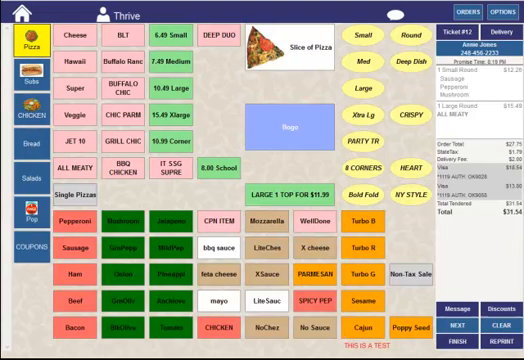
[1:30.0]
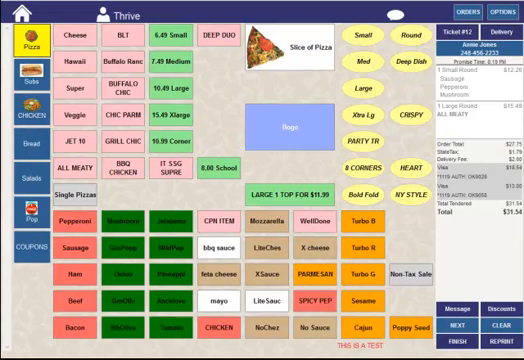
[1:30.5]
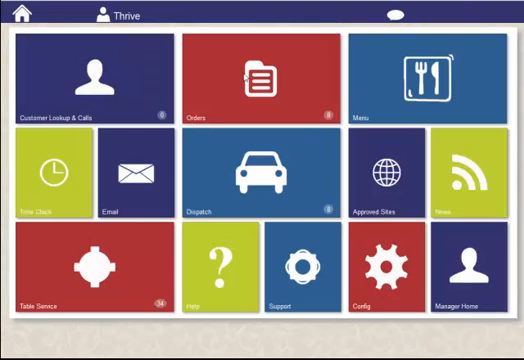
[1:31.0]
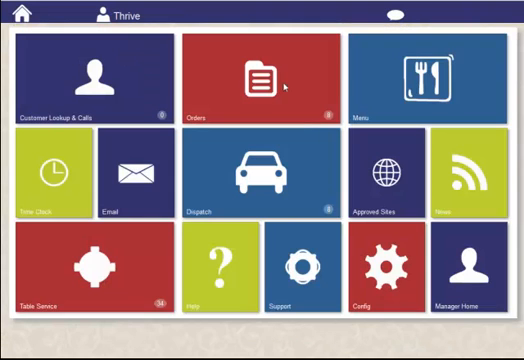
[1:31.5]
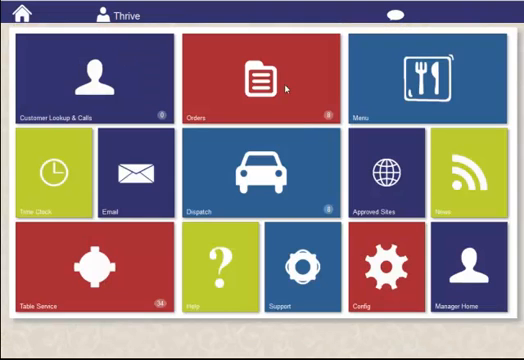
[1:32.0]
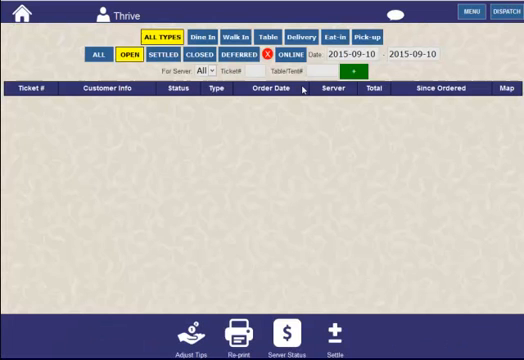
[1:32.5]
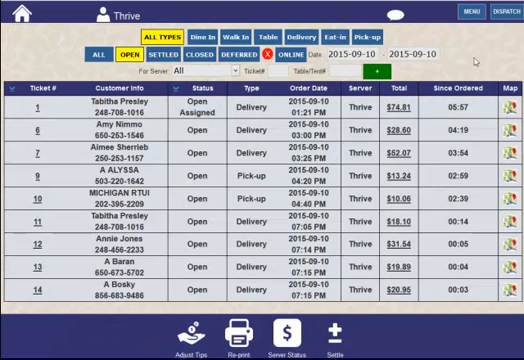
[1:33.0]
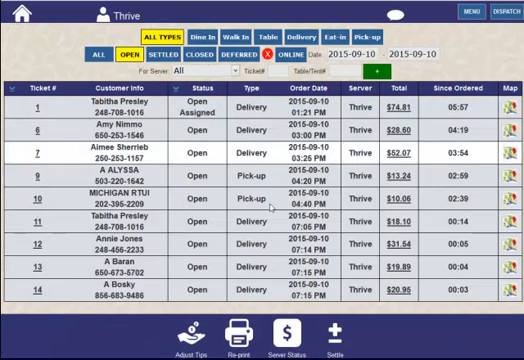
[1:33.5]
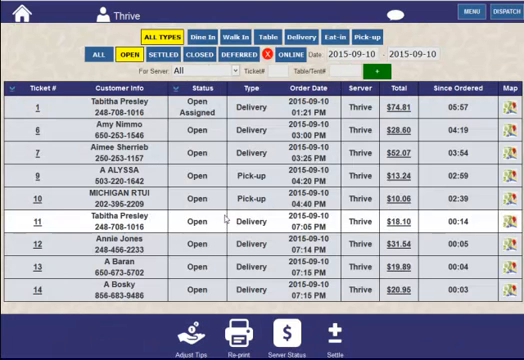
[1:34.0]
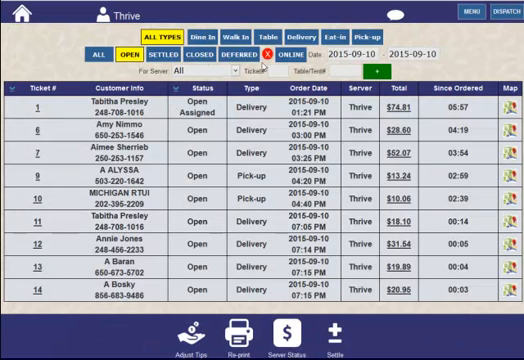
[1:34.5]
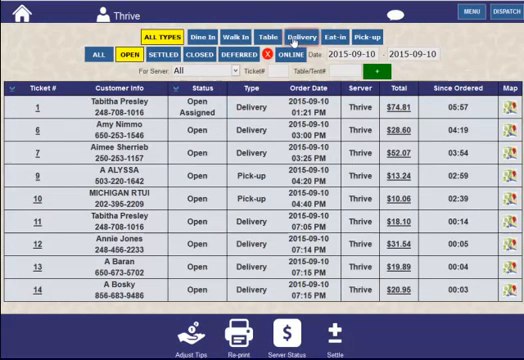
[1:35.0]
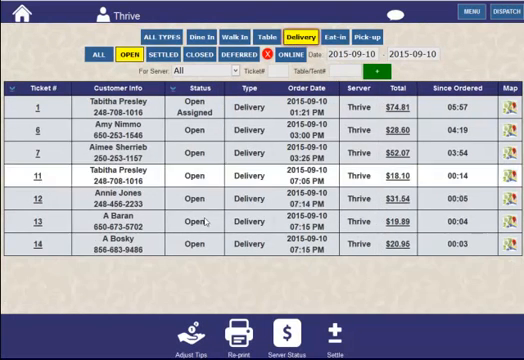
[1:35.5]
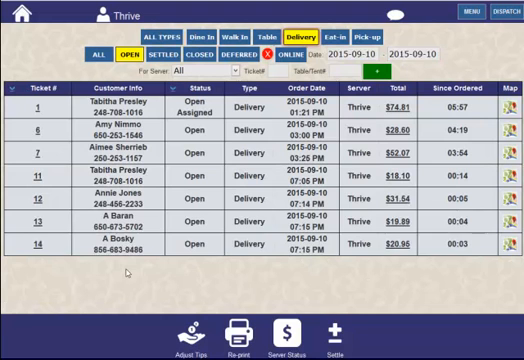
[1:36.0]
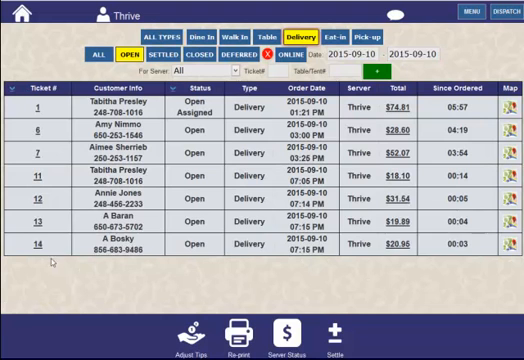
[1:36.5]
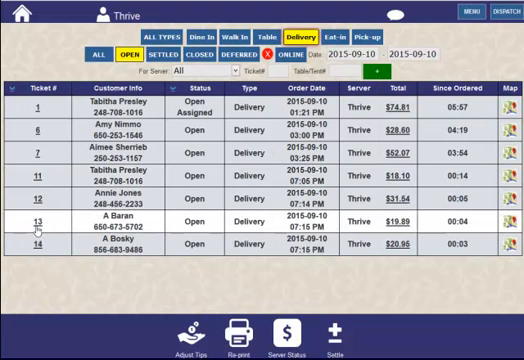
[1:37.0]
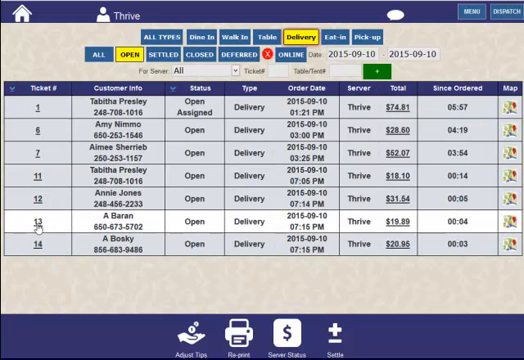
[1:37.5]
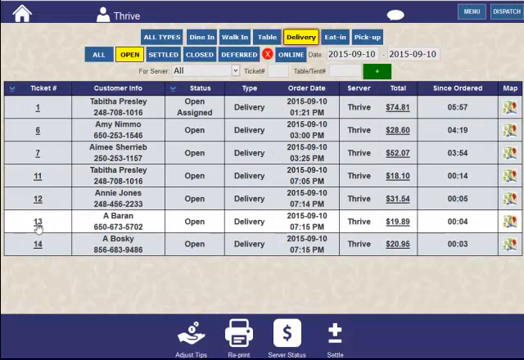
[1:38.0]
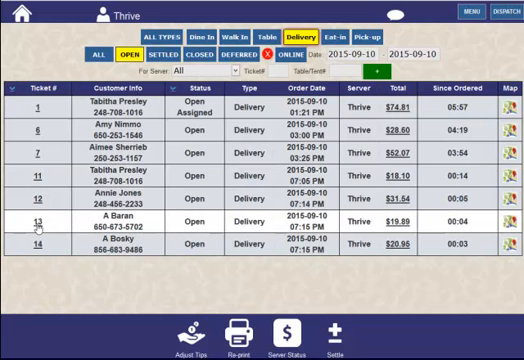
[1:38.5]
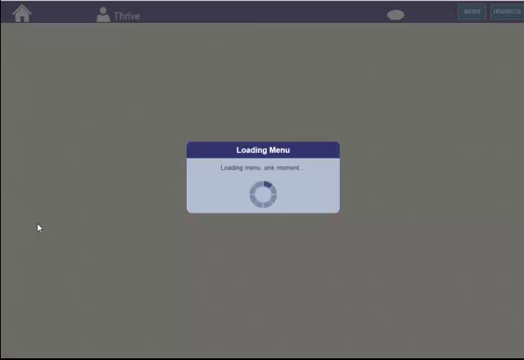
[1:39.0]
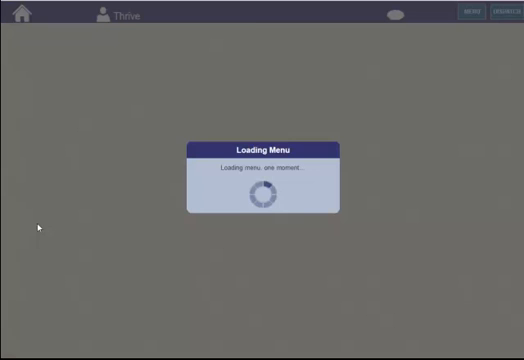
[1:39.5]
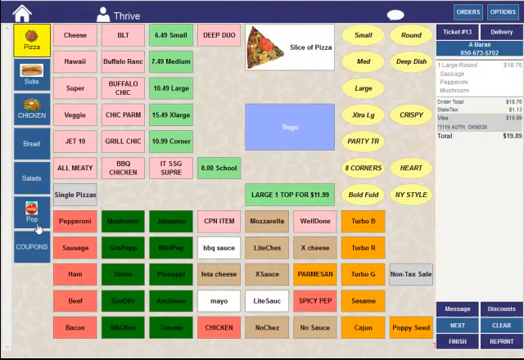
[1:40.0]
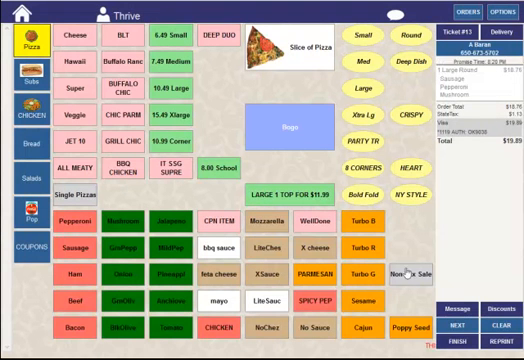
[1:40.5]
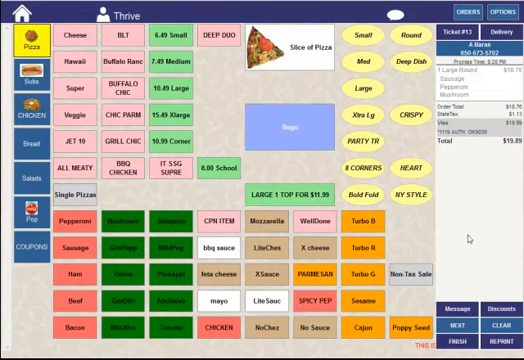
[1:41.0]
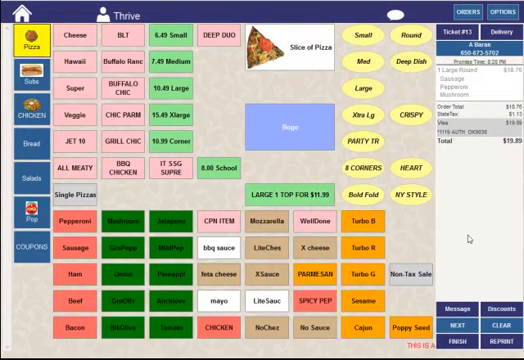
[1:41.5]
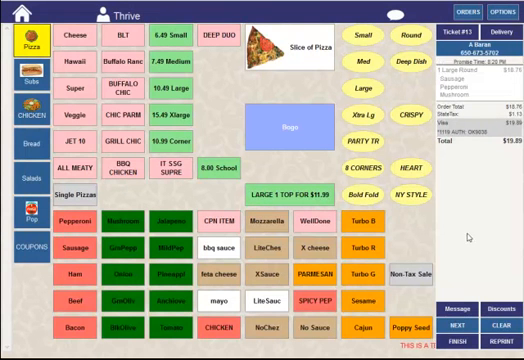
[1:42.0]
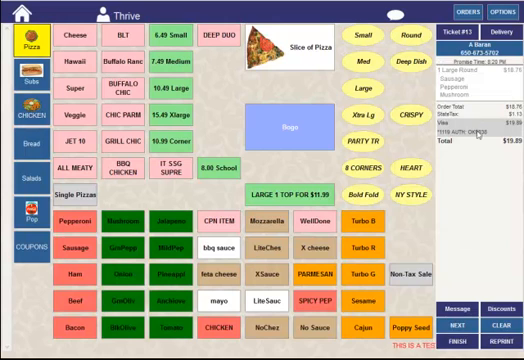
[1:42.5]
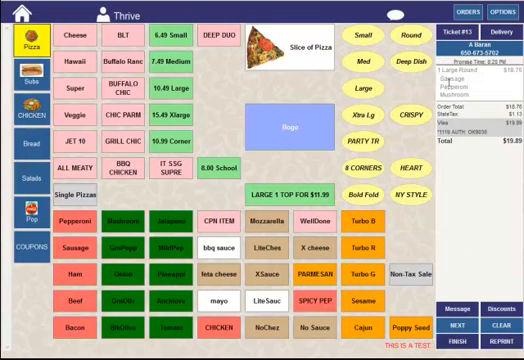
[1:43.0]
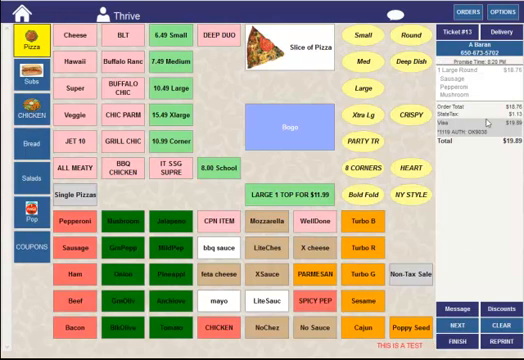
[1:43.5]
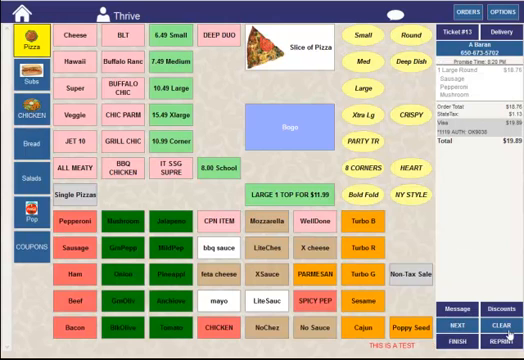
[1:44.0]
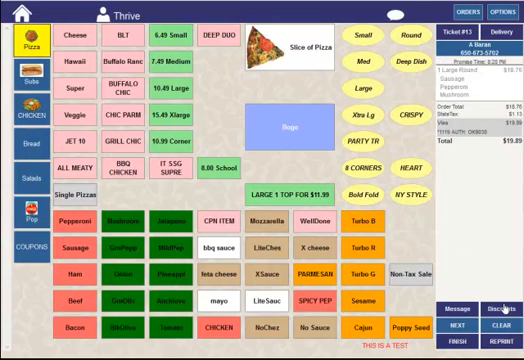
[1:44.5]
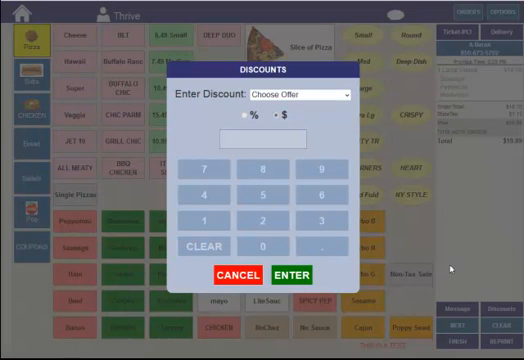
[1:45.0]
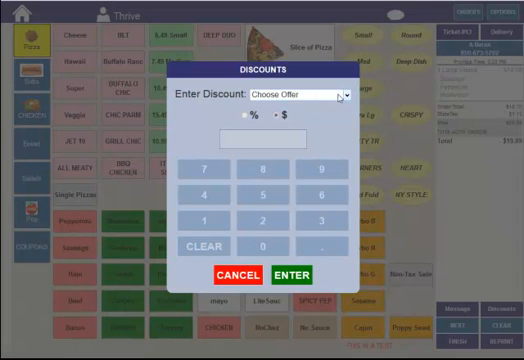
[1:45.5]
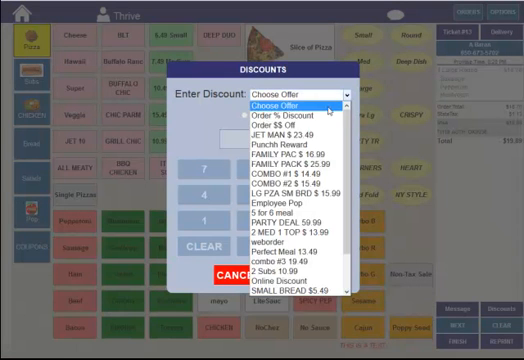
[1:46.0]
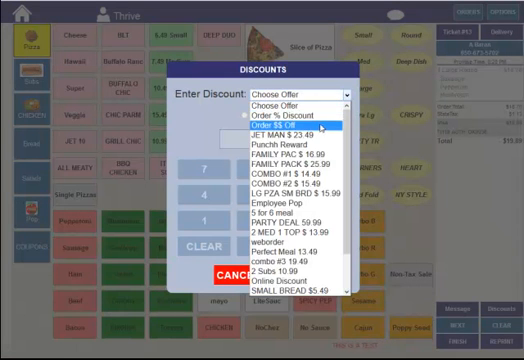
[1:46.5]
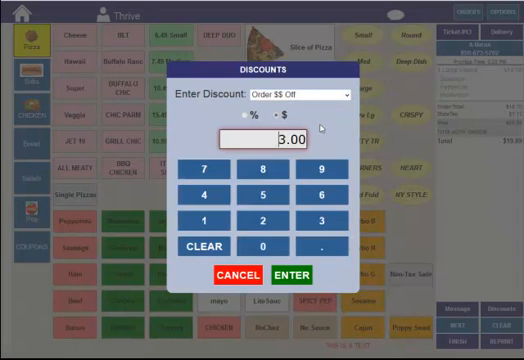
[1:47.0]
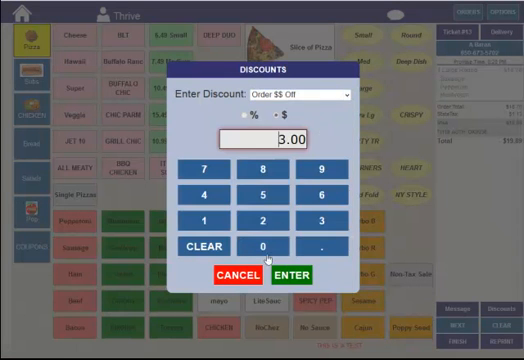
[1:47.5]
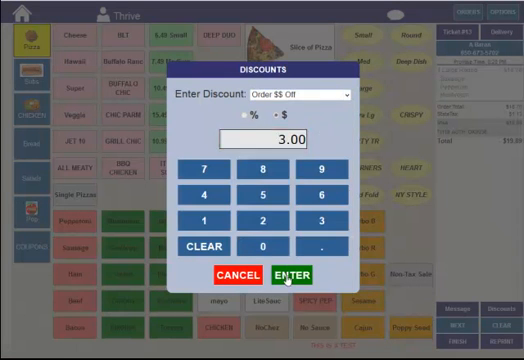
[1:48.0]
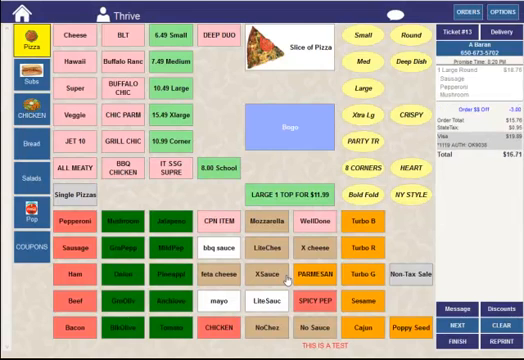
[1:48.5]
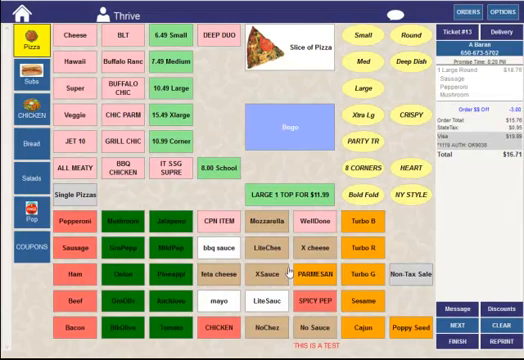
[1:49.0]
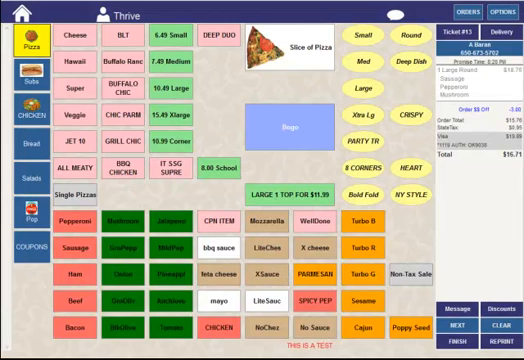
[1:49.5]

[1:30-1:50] The screen returns to the main menu with the blue, red and yellow icons for a few seconds, then to the list of orders with customer info. The Delivery option is clicked and is highlighted in yellow. Order number 13, A. Barron's order, for $19.89, is clicked. A loading icon pops up and the menu appears. The order is for a large round pizza with sausage, pepperoni and mushrooms. A discount offer, "MONEY OFF", is added, taking three dollars off the order. One large round or meaty pizza is also added, bringing the total to $31.54.